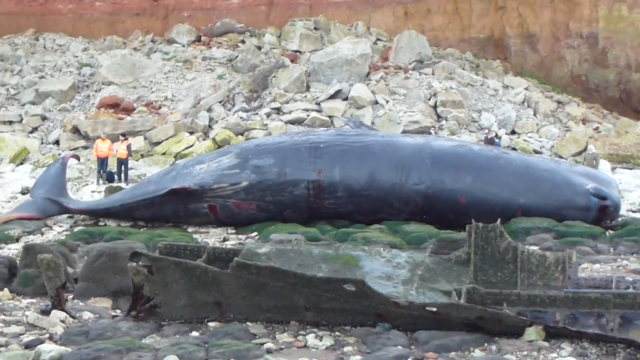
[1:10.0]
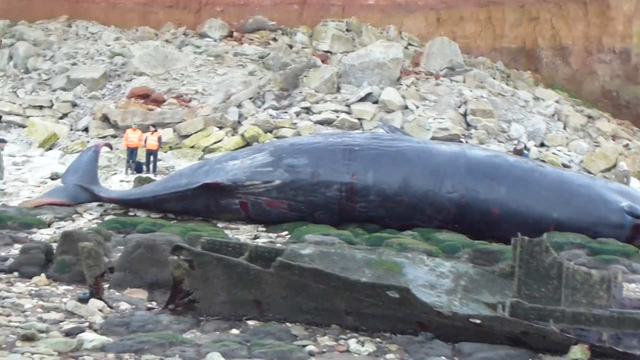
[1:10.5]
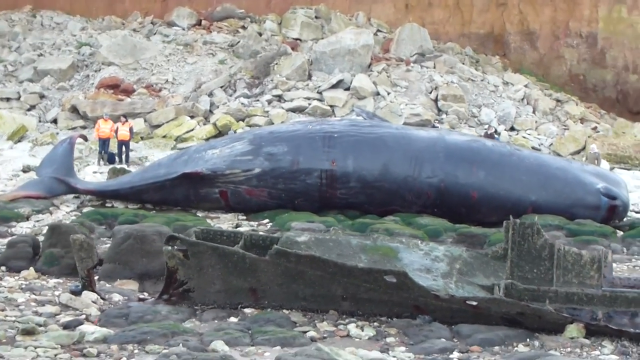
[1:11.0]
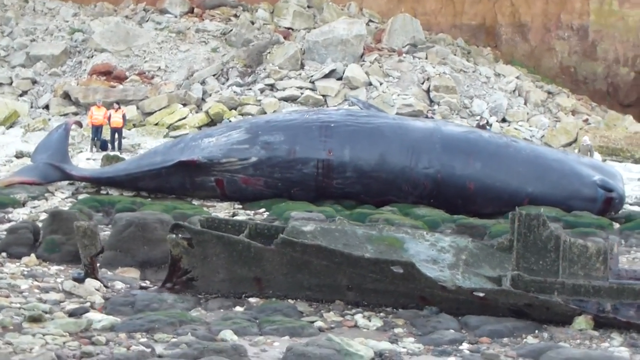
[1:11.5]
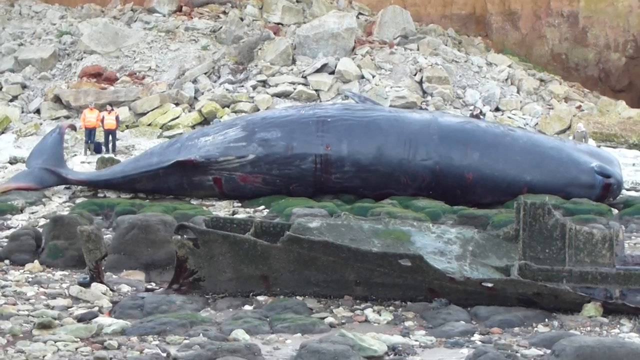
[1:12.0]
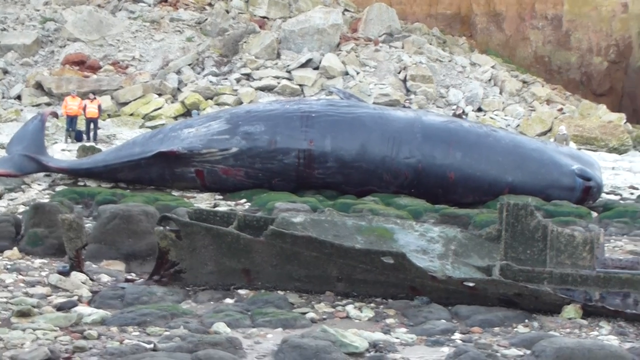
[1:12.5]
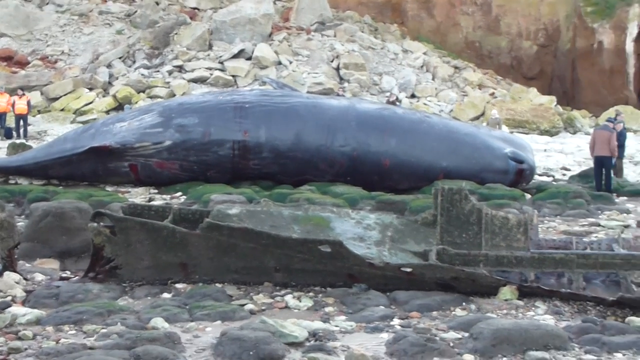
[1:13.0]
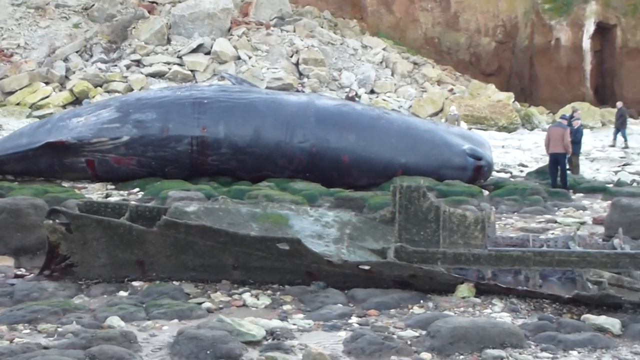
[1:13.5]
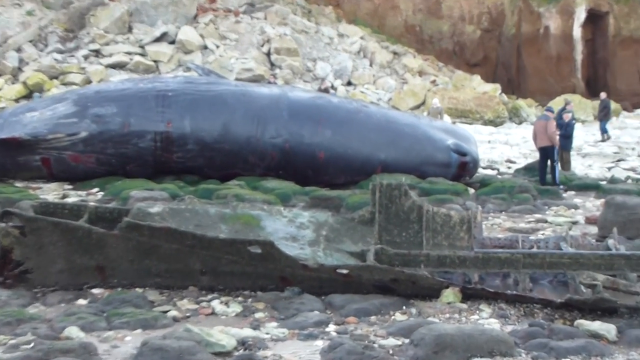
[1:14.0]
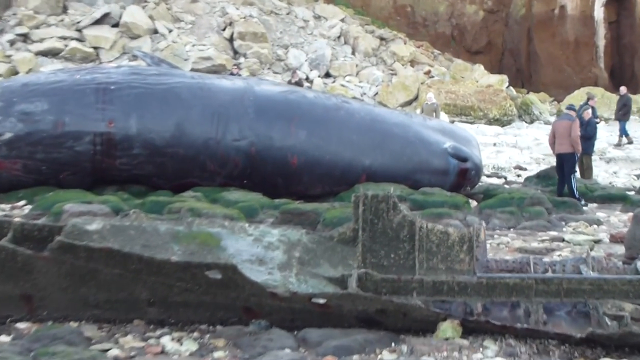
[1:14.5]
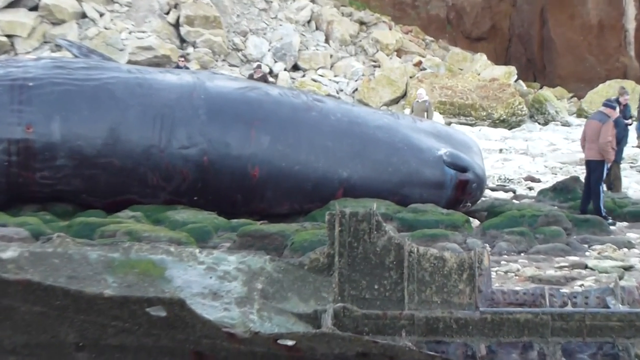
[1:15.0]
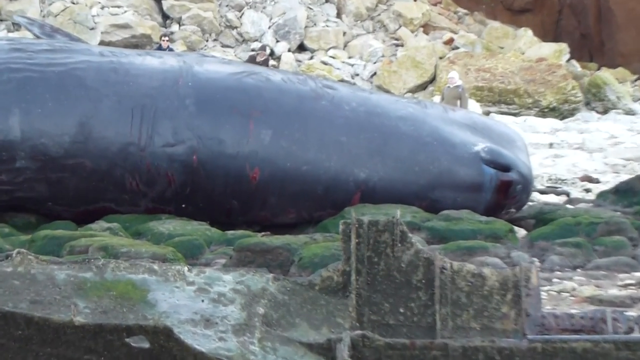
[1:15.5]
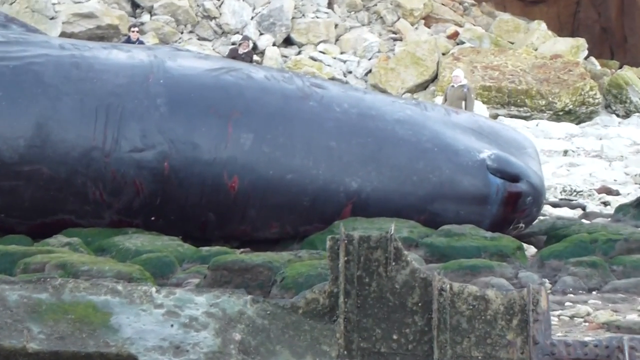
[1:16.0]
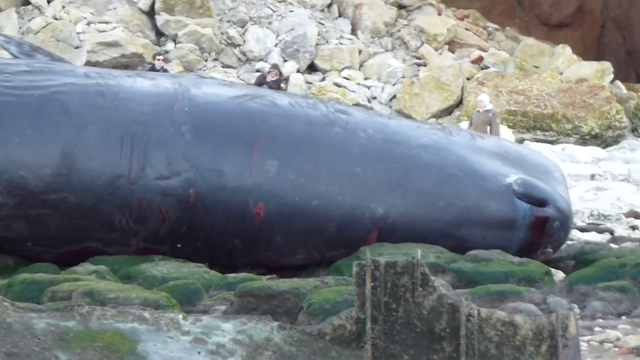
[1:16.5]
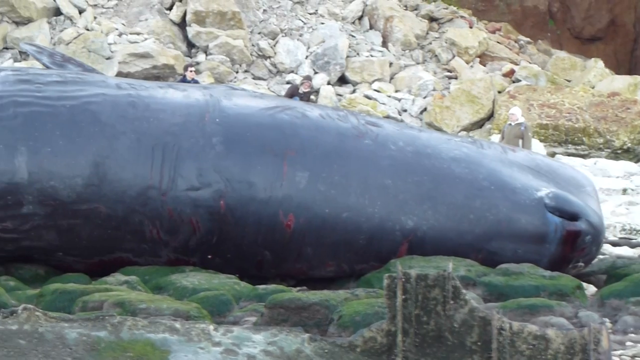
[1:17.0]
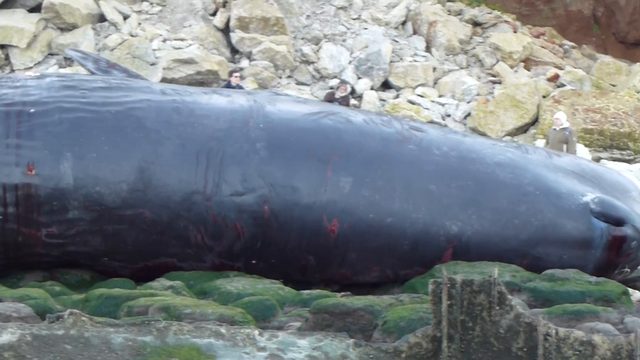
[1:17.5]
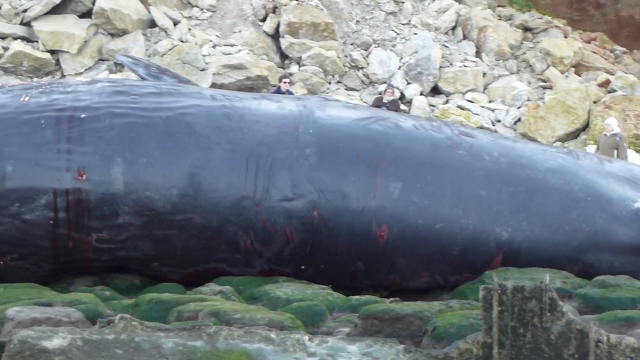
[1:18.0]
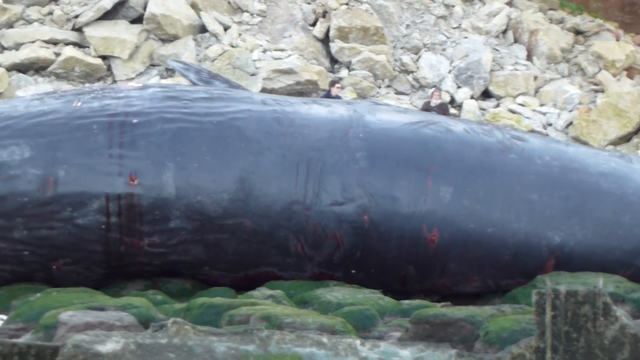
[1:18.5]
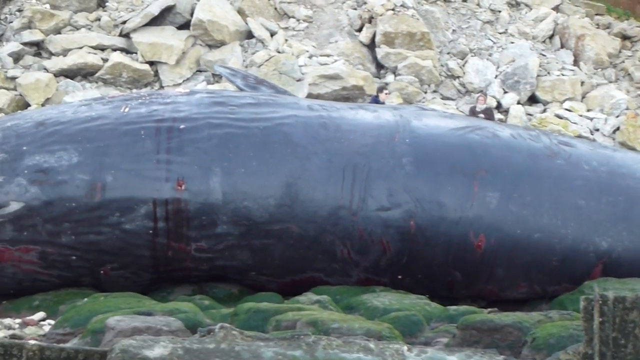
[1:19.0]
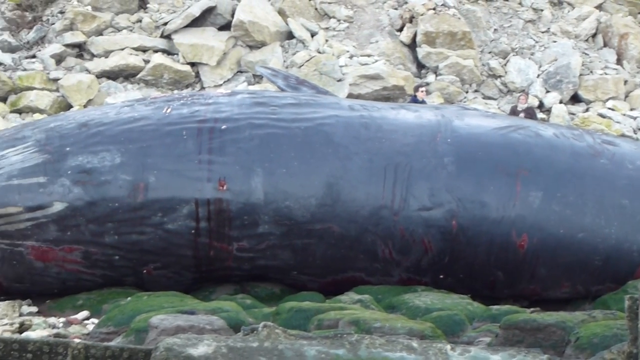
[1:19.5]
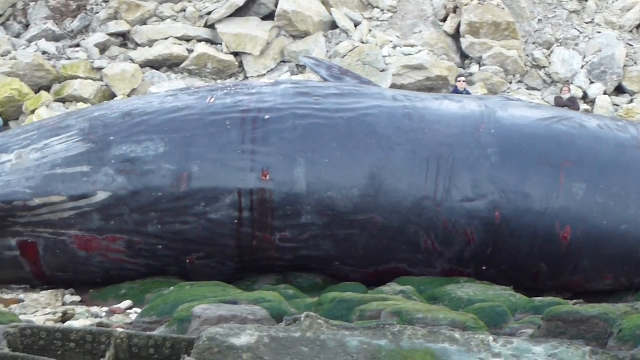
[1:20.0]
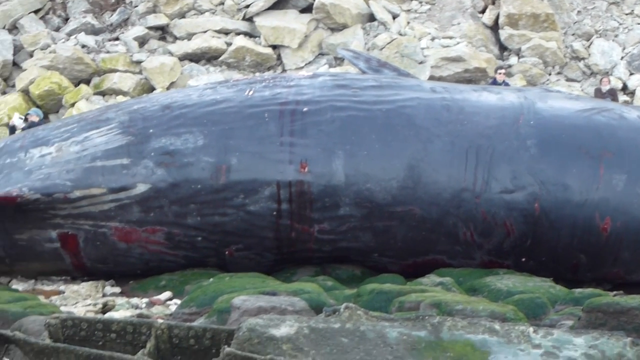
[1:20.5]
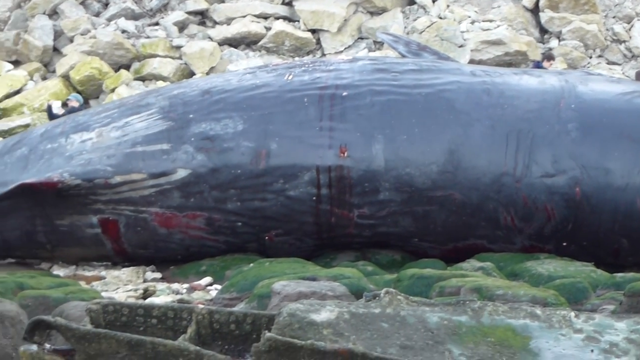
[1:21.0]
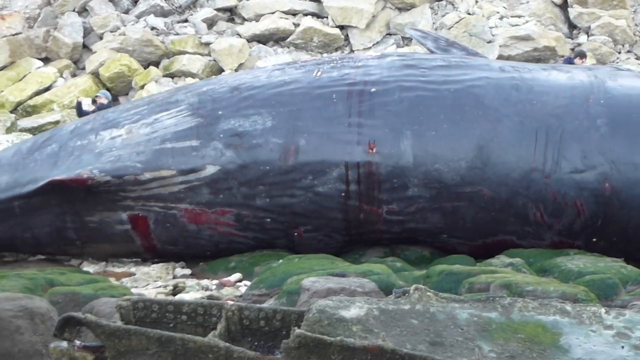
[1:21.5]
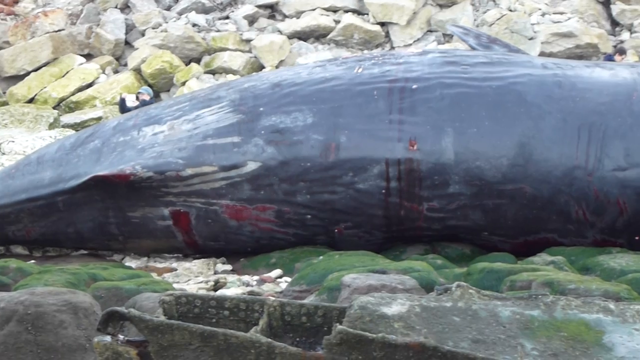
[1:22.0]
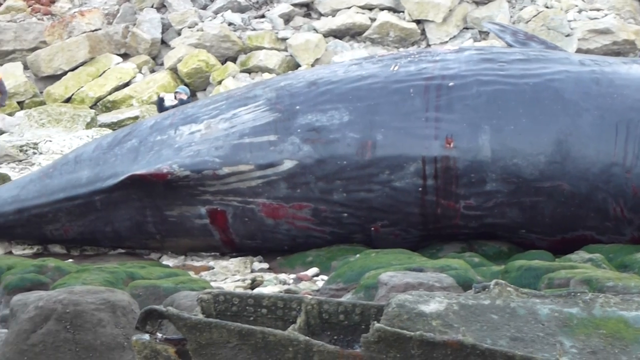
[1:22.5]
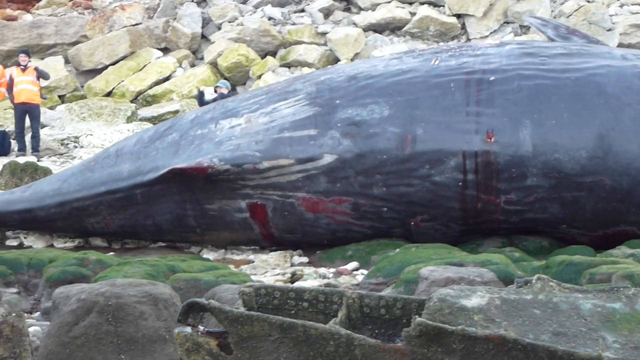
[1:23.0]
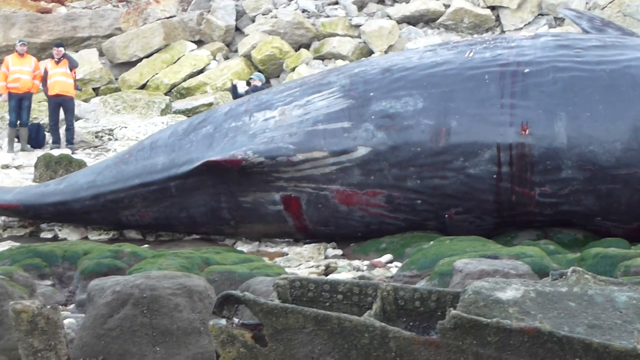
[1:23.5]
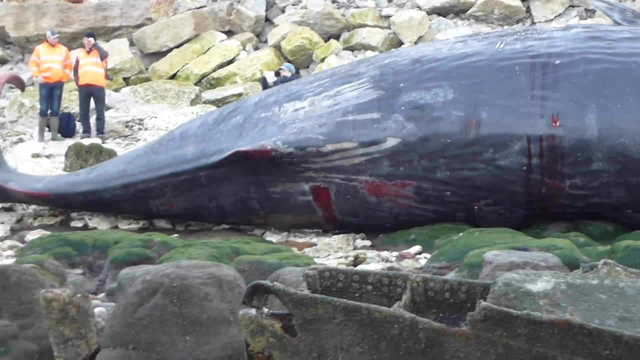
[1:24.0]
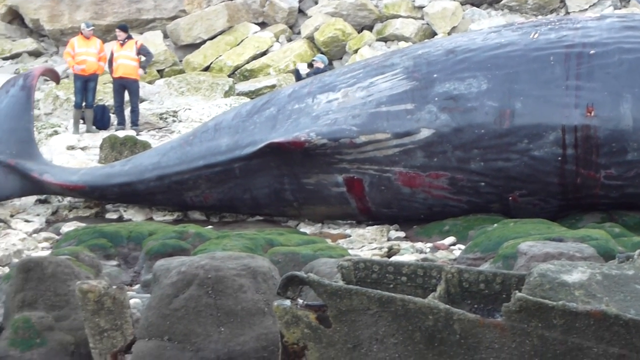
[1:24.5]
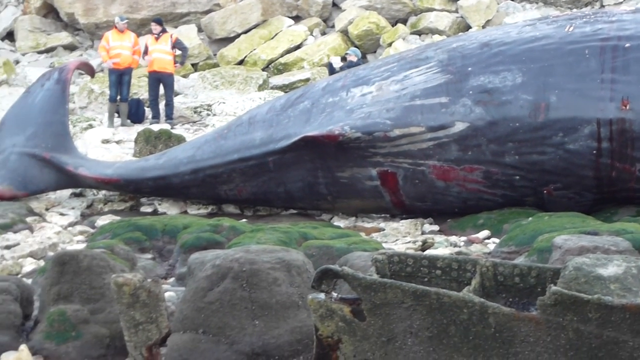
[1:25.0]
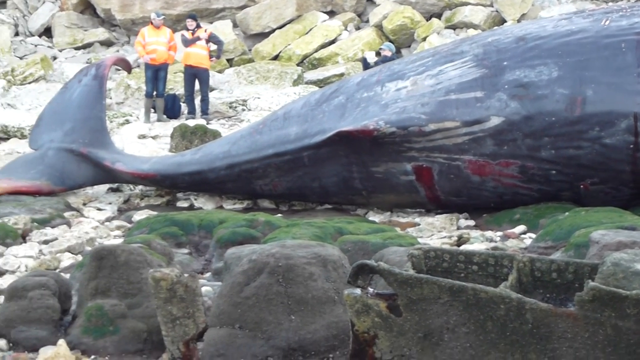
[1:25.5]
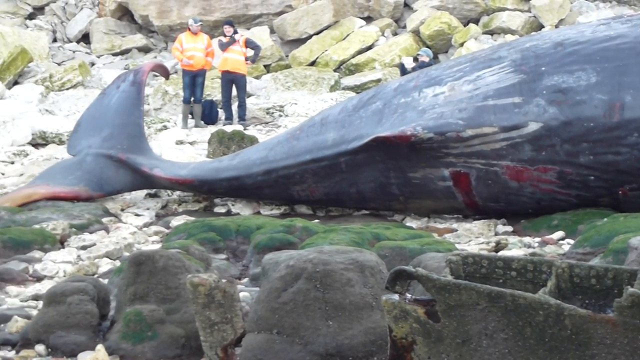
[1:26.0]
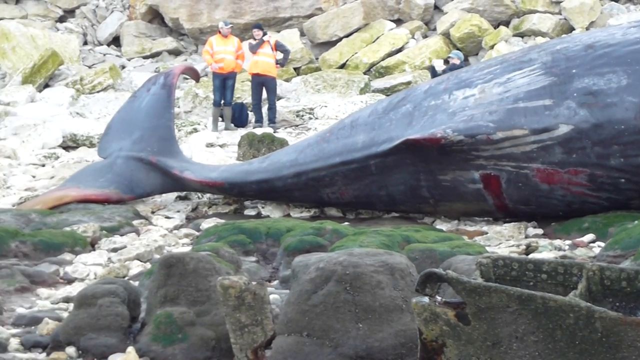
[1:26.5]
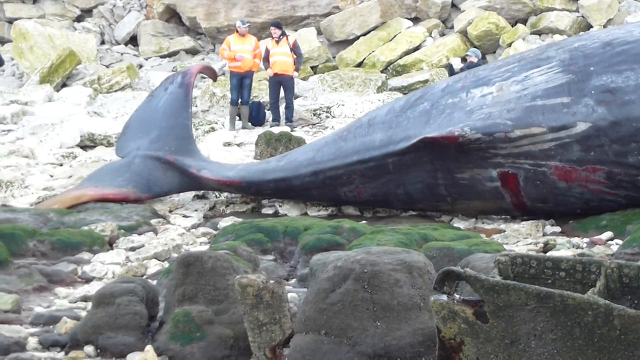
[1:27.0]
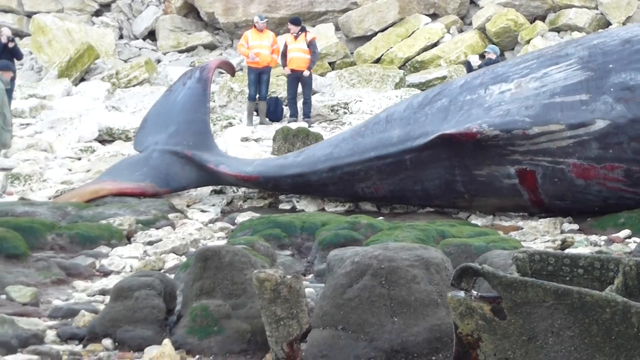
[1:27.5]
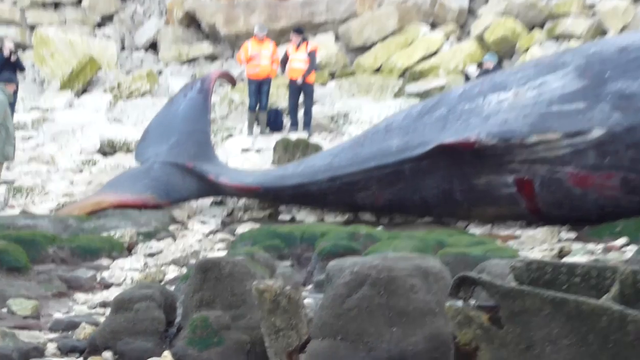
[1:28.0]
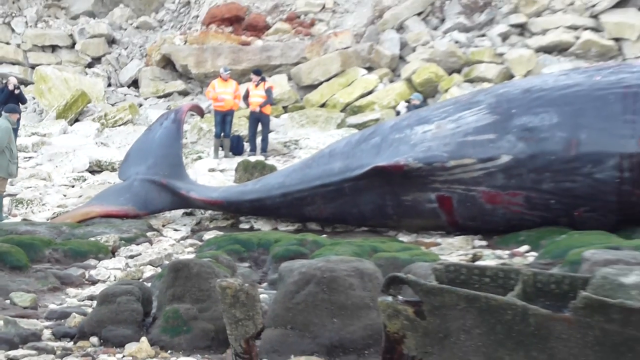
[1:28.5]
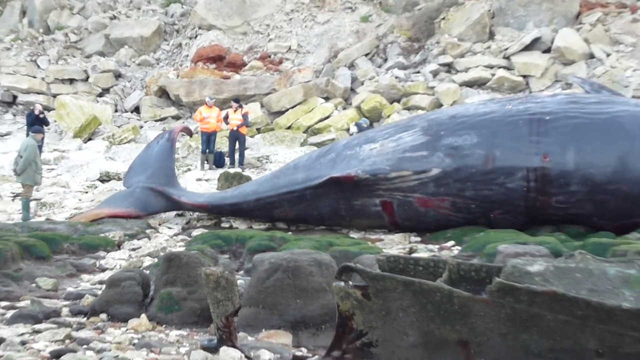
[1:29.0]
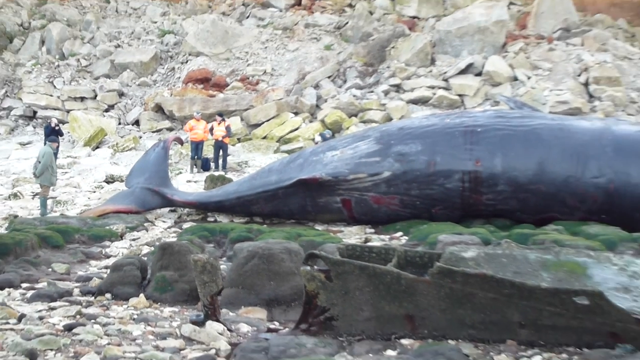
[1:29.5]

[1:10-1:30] At the base of a mountain is a rocky, stony beach with the wreckage of a boat that appears to have been there for quite a while. A section of the stones is green, apparently with moss, and a gray whale lies on it on its right side. Its length is visible from the top of its head to its tail. Blood comes out of its nostrils, and its body is beat up, scratched and cut, bleeding in those spots as well, with deep gashes especially at its tail section. Plenty of people stand around looking at the whale. The face of a mountain in the background is a mud red, apparently clay color.